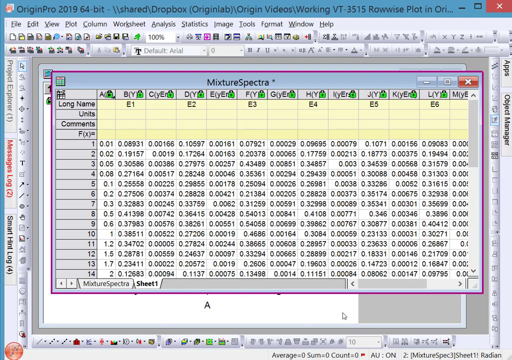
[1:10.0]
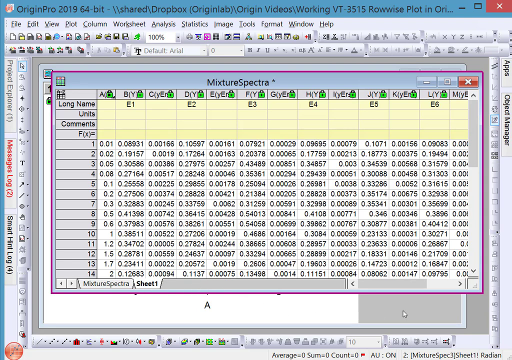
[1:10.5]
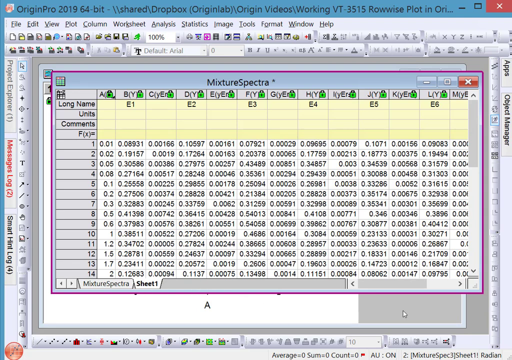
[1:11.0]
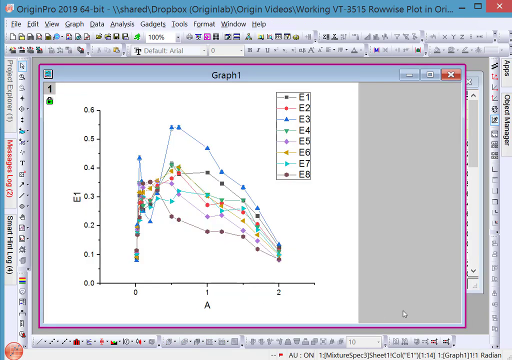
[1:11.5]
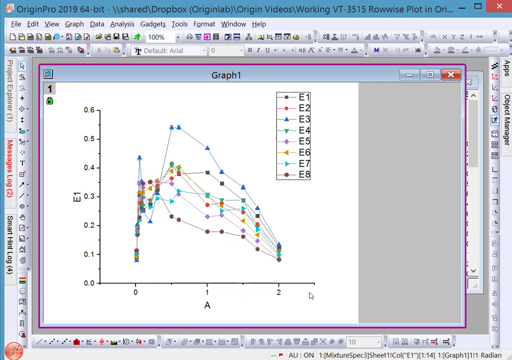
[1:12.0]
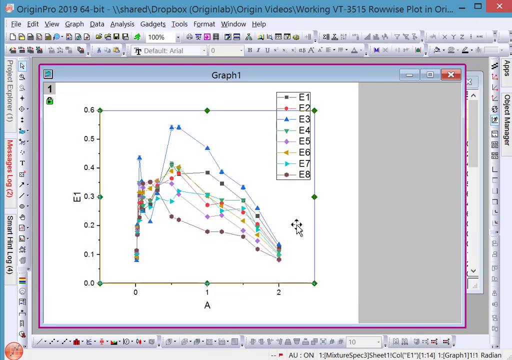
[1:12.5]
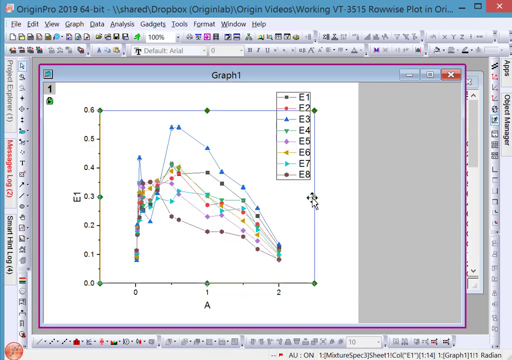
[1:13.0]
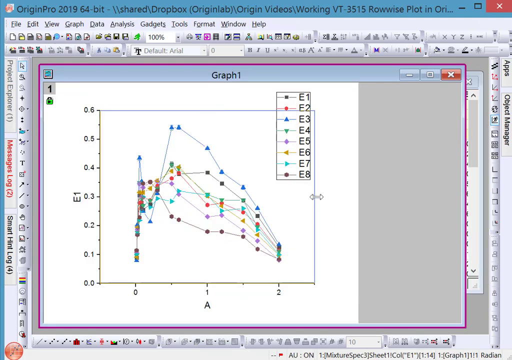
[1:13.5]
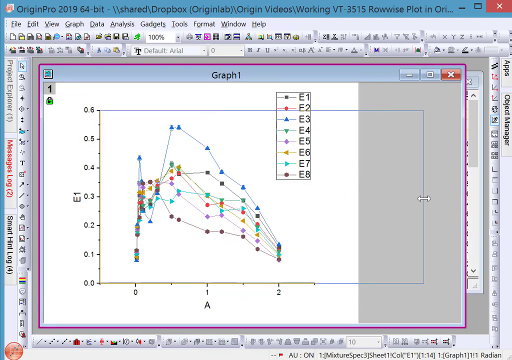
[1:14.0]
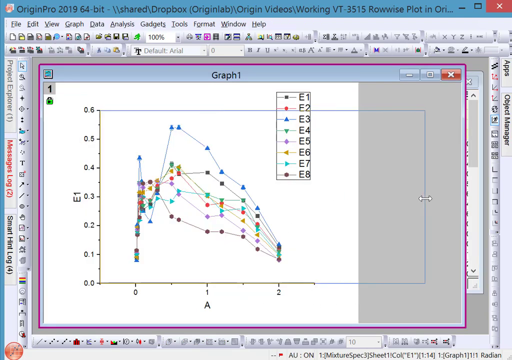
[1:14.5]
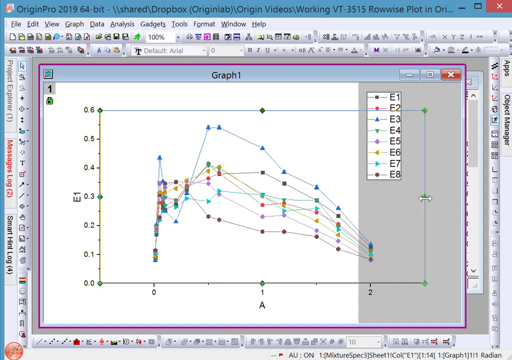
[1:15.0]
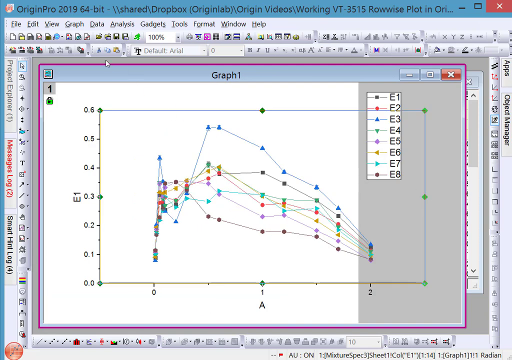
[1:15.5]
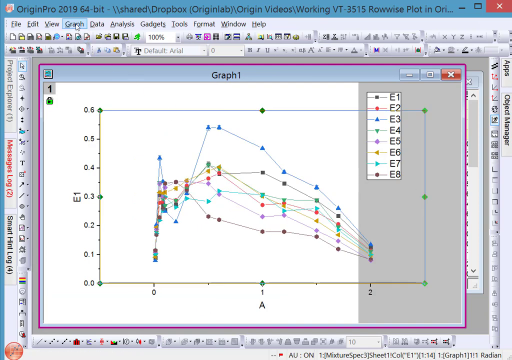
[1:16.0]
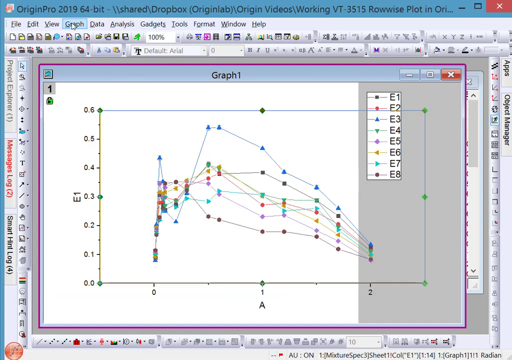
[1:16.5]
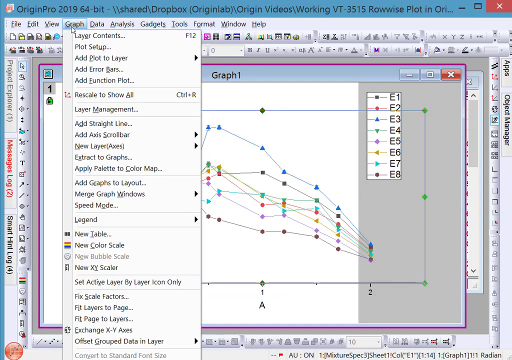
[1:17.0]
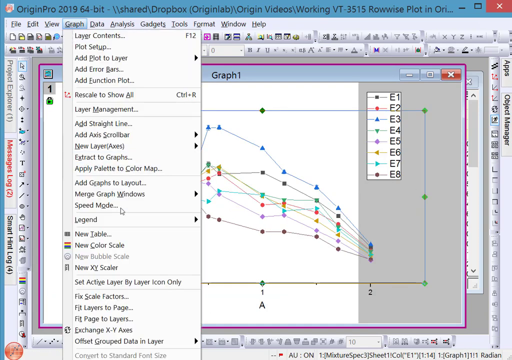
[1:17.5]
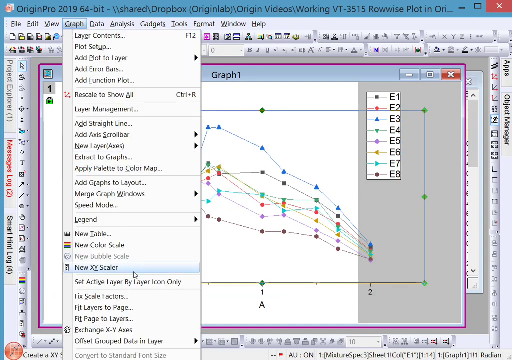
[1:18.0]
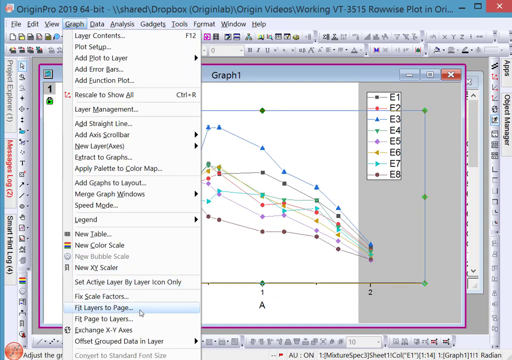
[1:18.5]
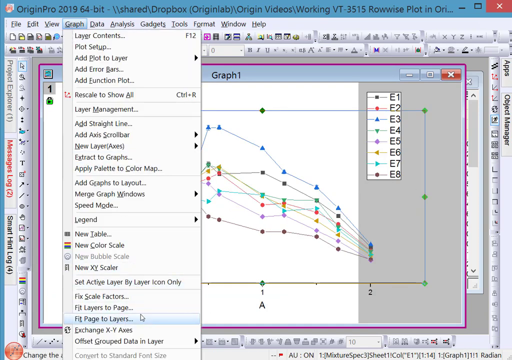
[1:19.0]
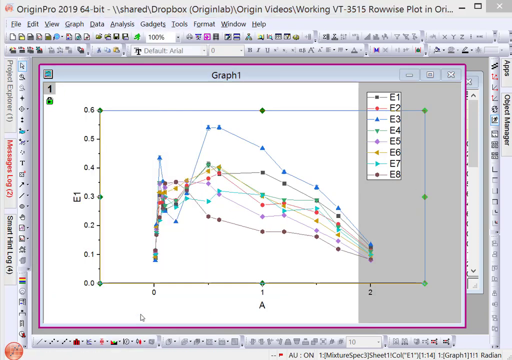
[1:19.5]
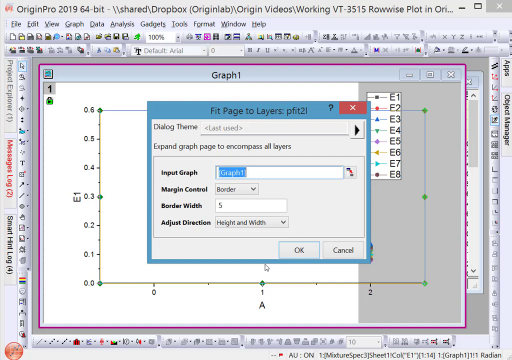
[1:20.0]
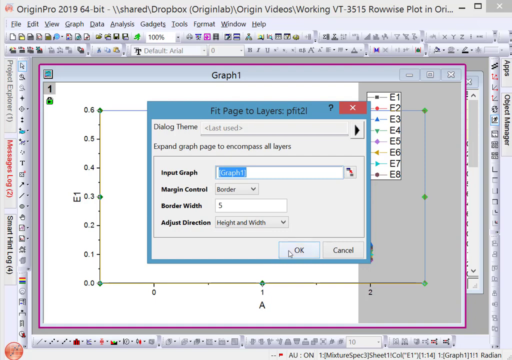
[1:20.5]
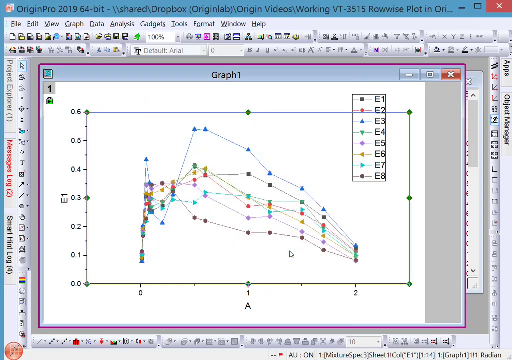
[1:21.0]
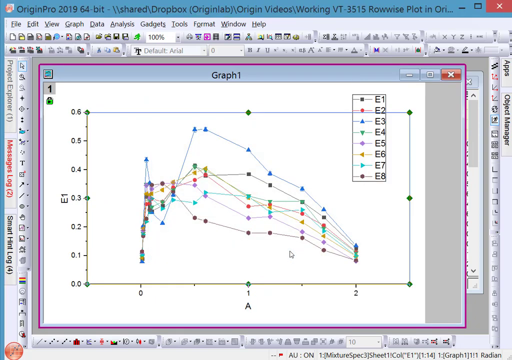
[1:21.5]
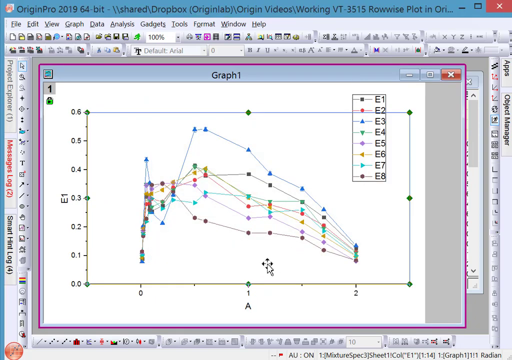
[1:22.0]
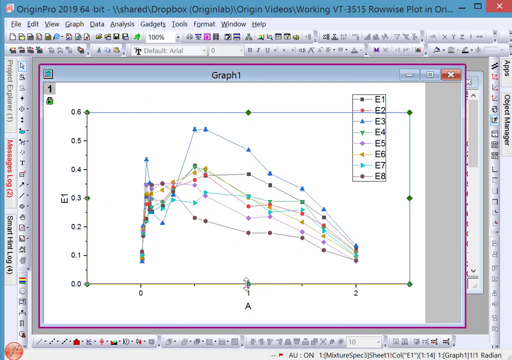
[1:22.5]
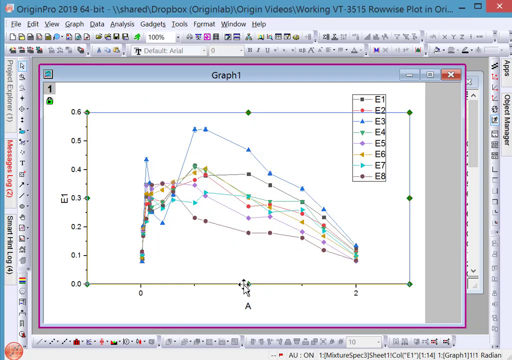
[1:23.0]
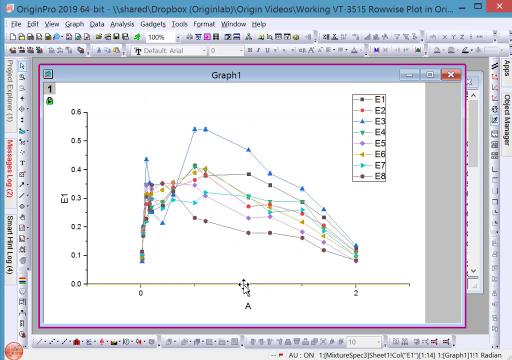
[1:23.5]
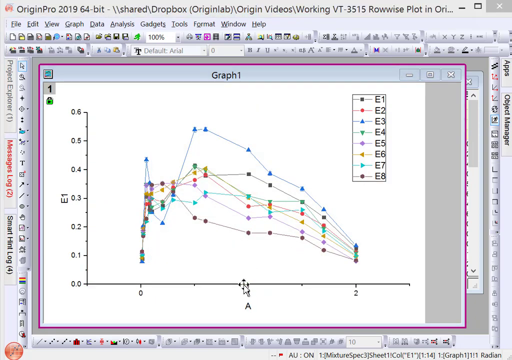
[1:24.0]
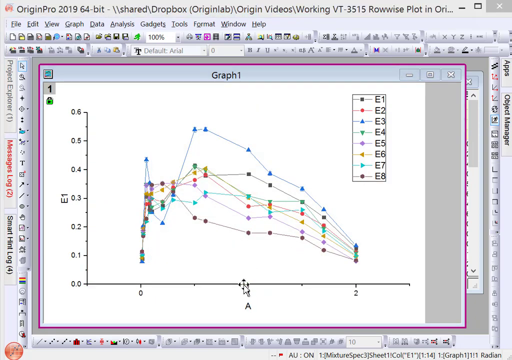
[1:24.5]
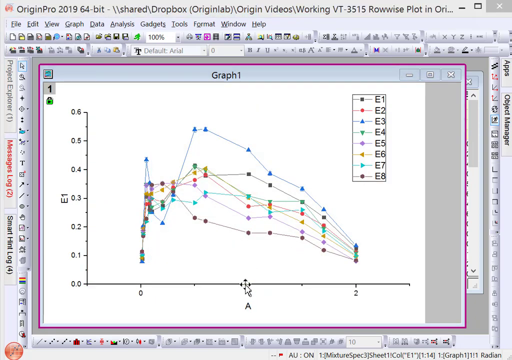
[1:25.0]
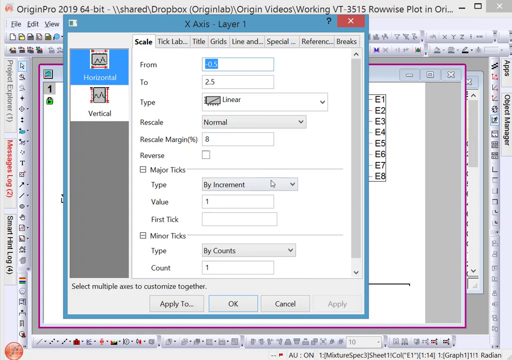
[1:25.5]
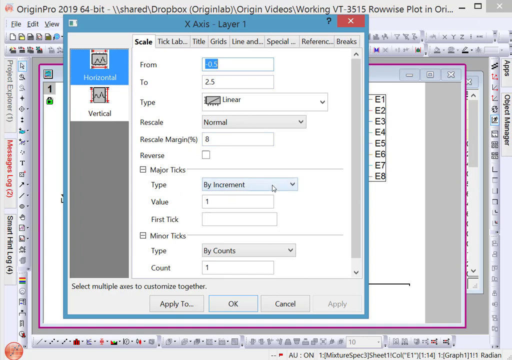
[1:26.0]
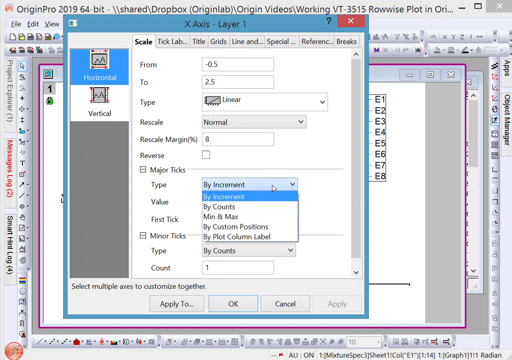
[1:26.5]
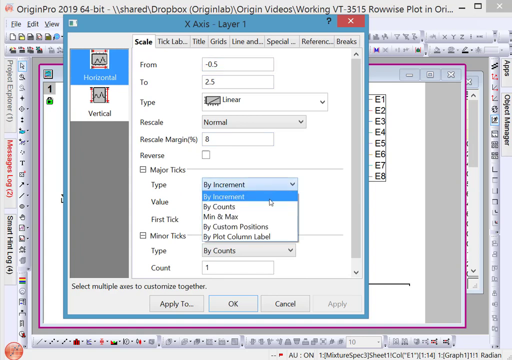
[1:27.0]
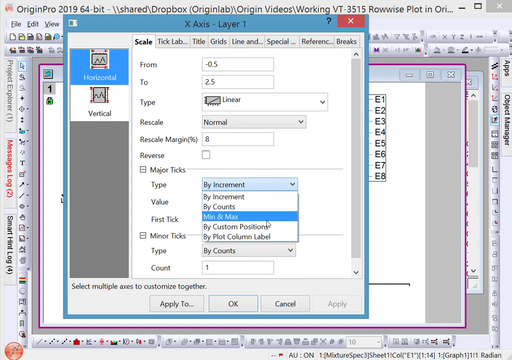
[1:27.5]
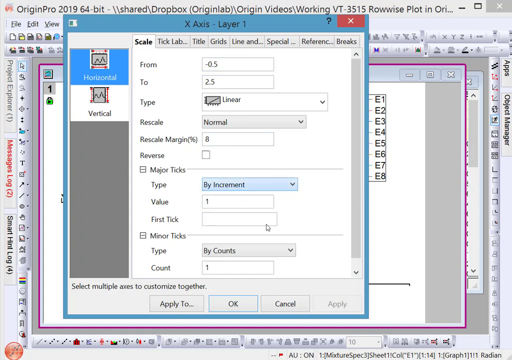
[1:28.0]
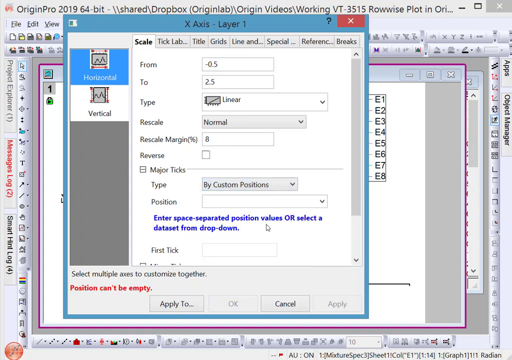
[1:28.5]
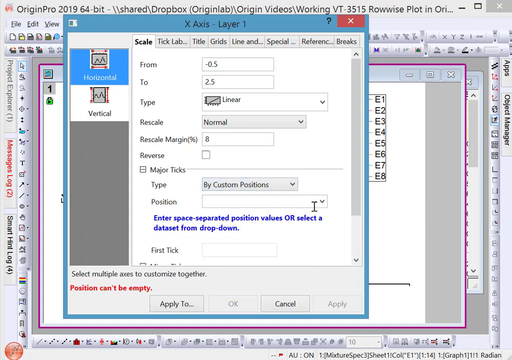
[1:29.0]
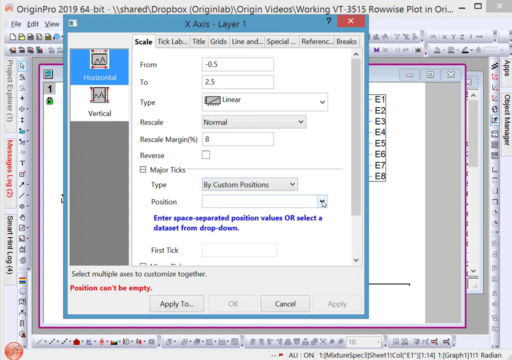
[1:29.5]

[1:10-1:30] A spreadsheet titled 'mixture spectra' is open in a program called Origin Pro. The cursor moves slightly to the right at the bottom of the screen and opens a different window titled 'Graph 1', which shows a line graph with lines and plot points labelled 'e1' through 'e8'. The cursor moves up and selects the graph, outlining it with a box for transformation. Grabbing the right side of the box turns the cursor into left and right arrows, and it drags the graph to the right so it extends into the blank space of the graph window. The cursor then moves to the top of the screen, selects the graph tab and opens a drop-down menu, then moves down to select 'Fit Page to Layers'. A popup window labelled 'Fit Page to Layers' opens with options for 'input graph', 'margin control', 'border width' and 'adjust direction'. The cursor clicks 'ok' at the bottom of the pop-up, and the graph is adjusted to have a fully white background instead of extending into the blank area. The cursor then moves down and selects the x-axis, bringing up a pop-up window with options to change the x-axis values. A drop-down menu under 'major ticks', currently set to 'by increment', is opened, and the cursor moves down it and selects 'by custom resolutions'. Blue text appears below the drop-down menu stating, 'Enter space-separated position values or select a dataset from drop down,'.